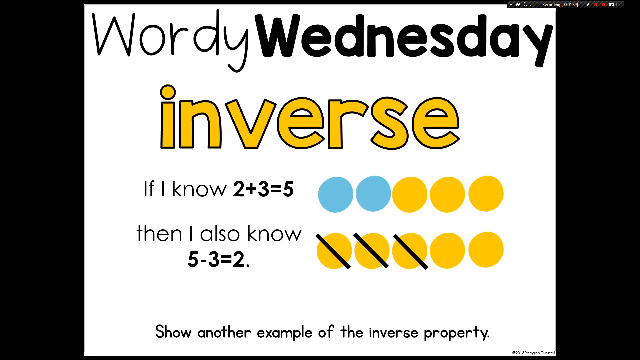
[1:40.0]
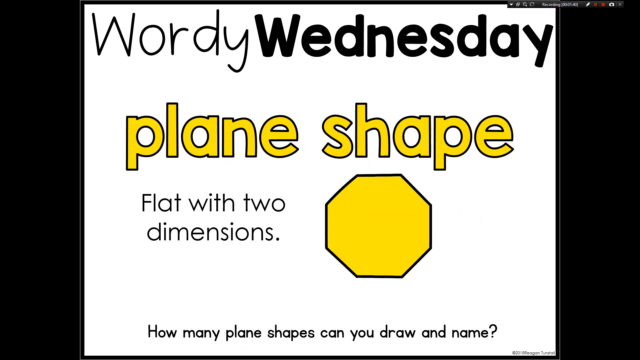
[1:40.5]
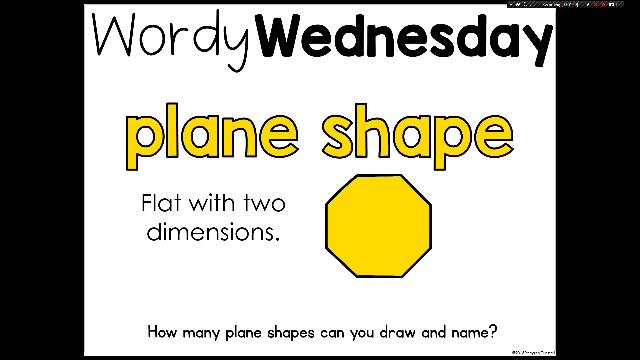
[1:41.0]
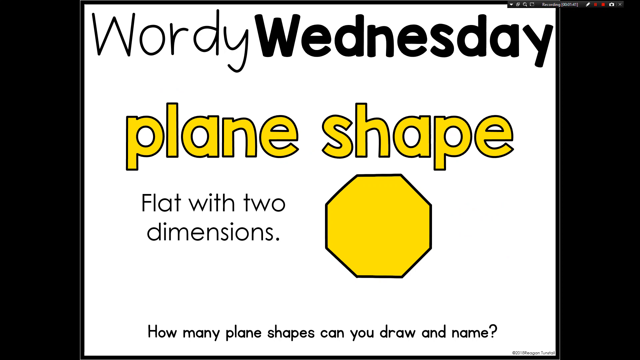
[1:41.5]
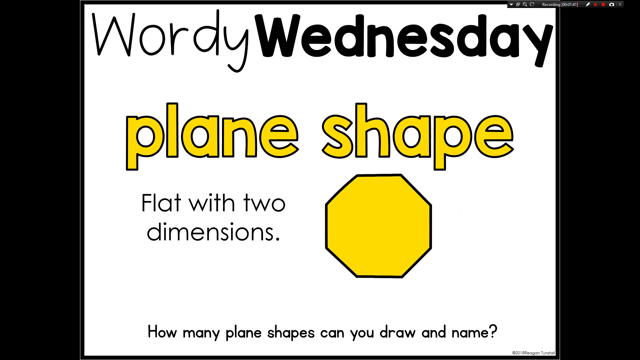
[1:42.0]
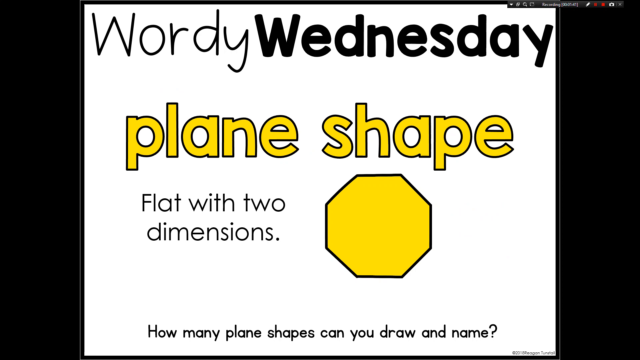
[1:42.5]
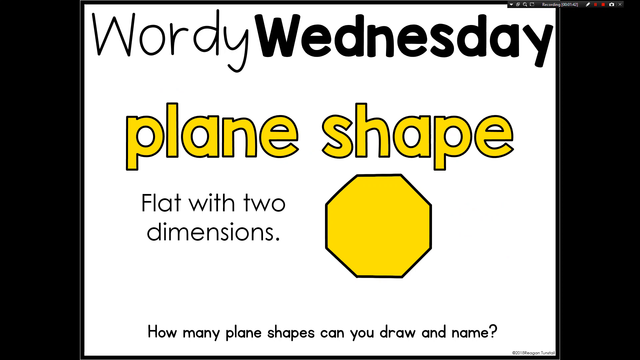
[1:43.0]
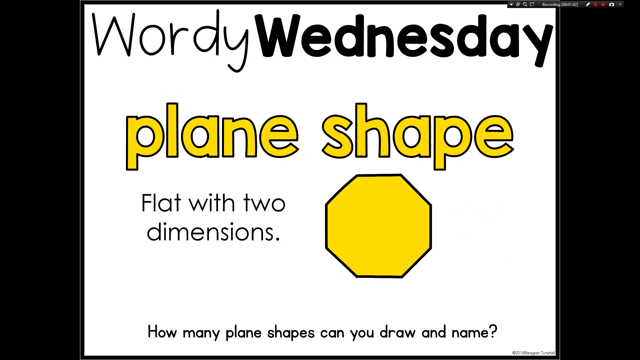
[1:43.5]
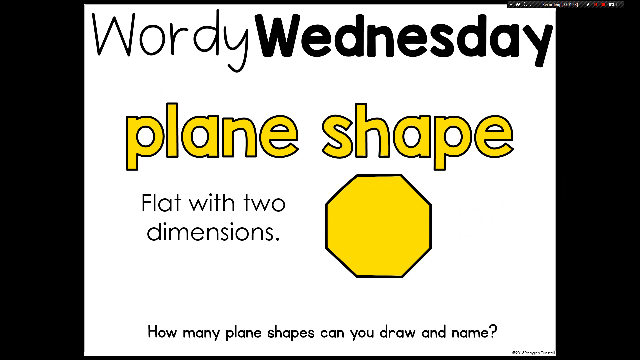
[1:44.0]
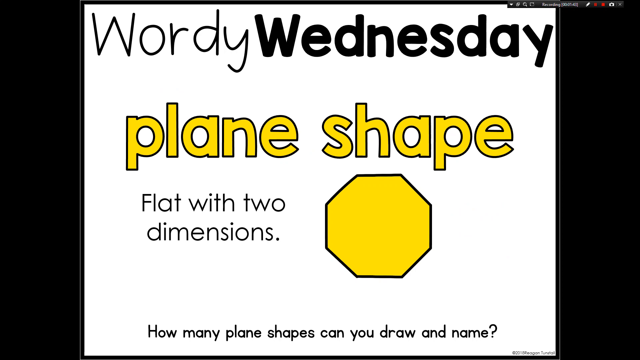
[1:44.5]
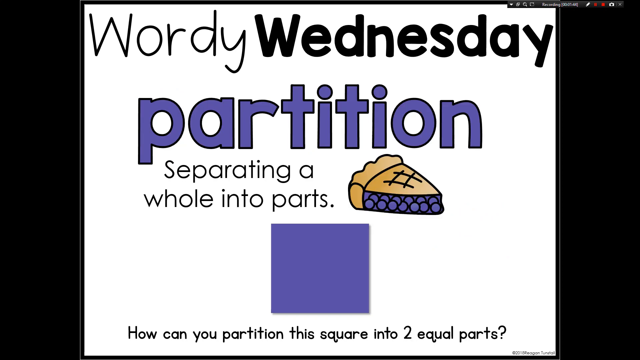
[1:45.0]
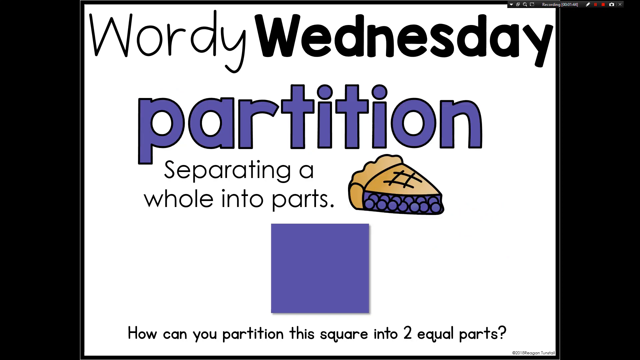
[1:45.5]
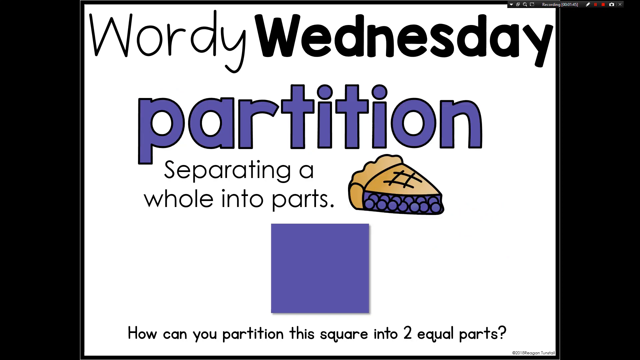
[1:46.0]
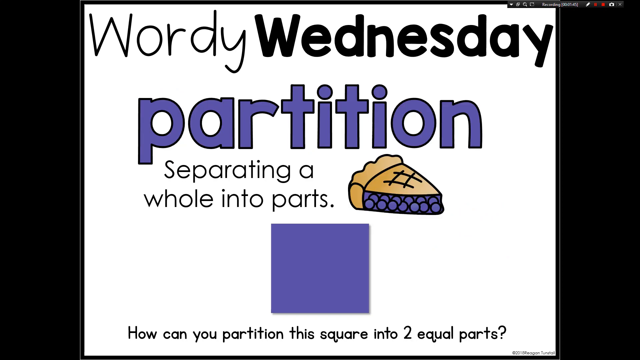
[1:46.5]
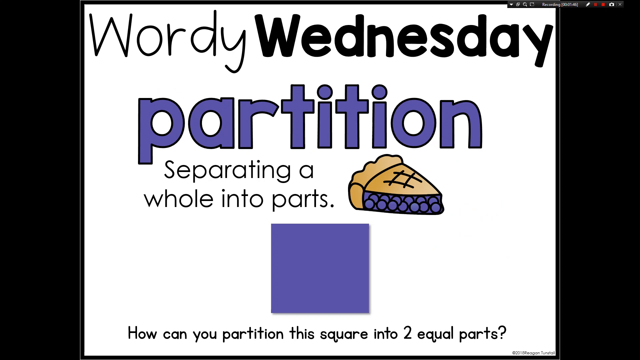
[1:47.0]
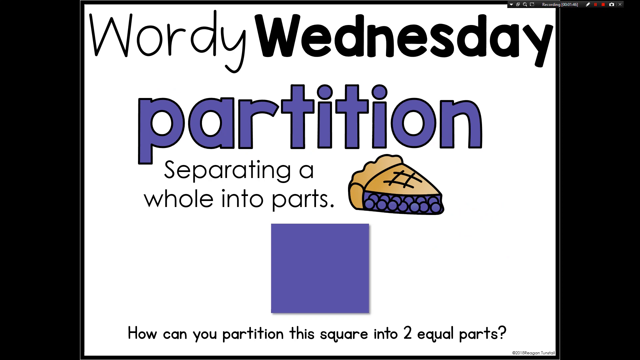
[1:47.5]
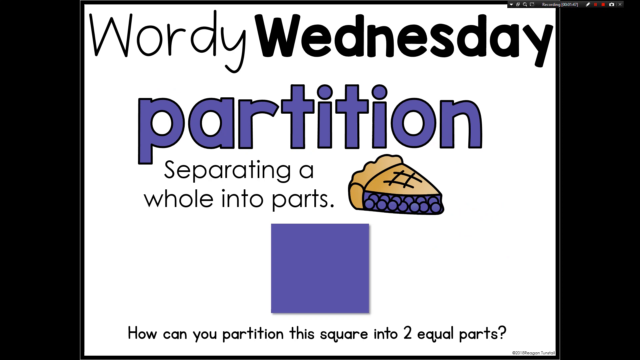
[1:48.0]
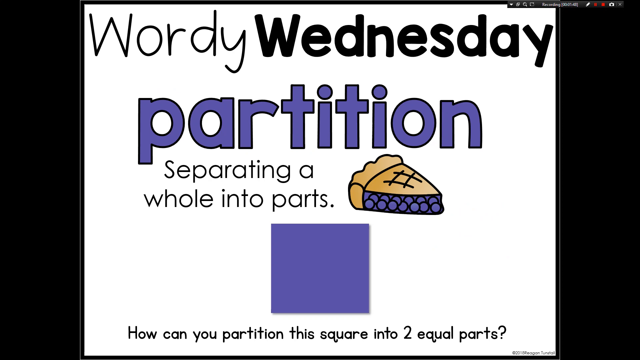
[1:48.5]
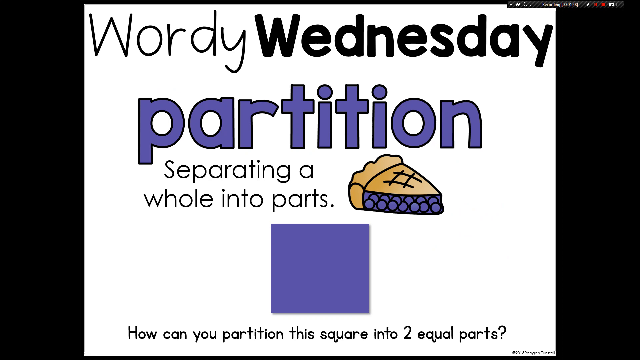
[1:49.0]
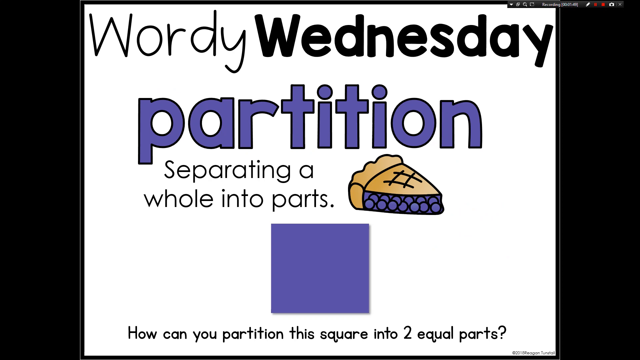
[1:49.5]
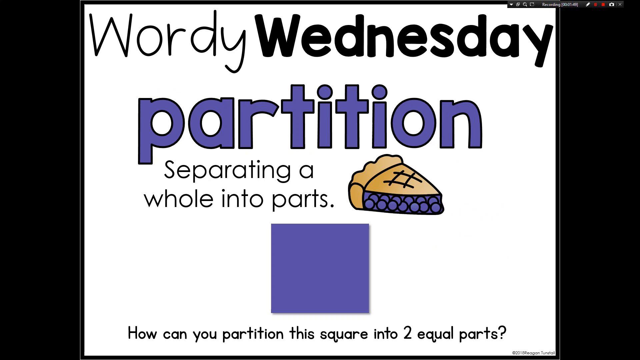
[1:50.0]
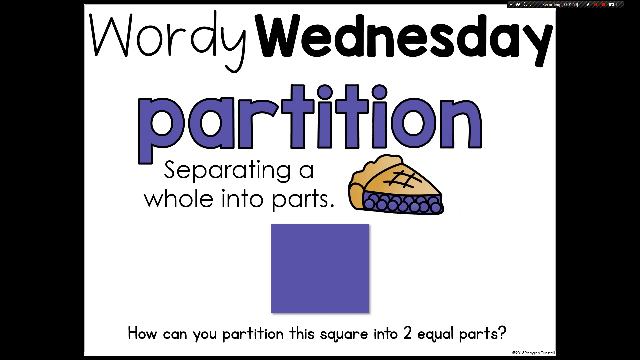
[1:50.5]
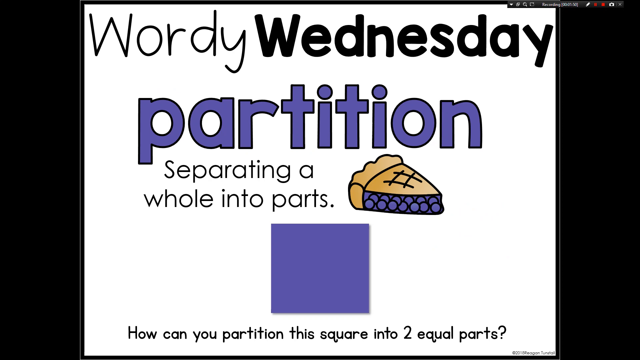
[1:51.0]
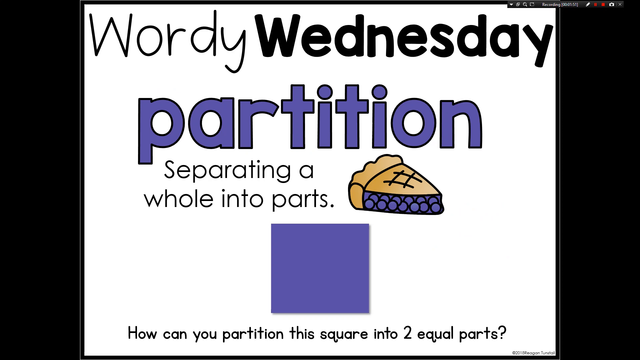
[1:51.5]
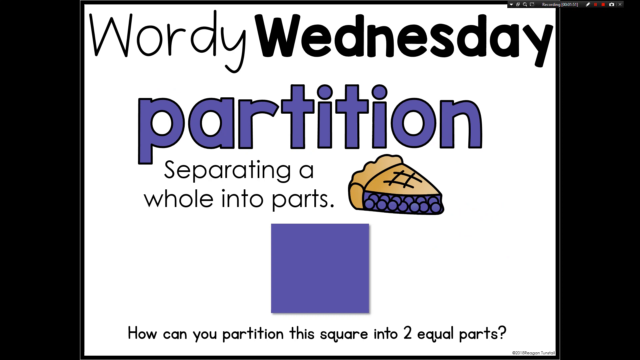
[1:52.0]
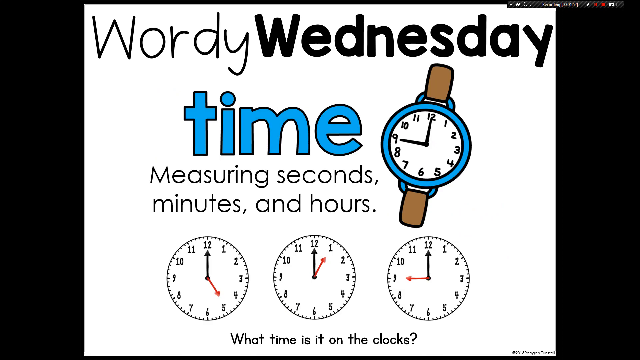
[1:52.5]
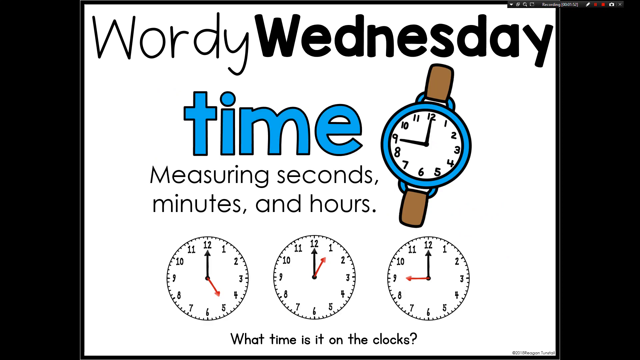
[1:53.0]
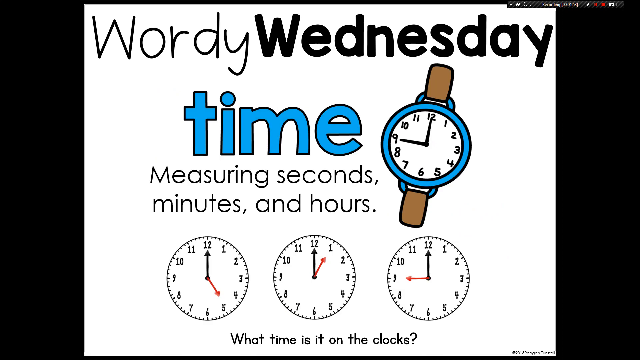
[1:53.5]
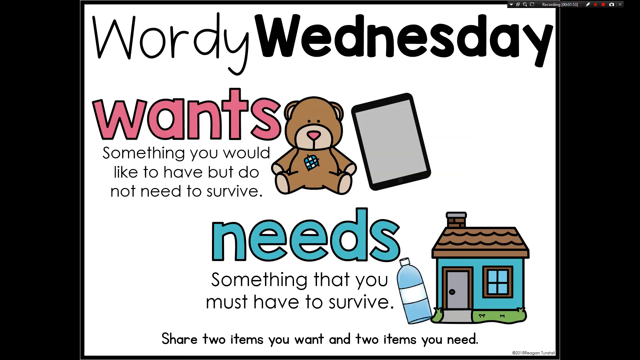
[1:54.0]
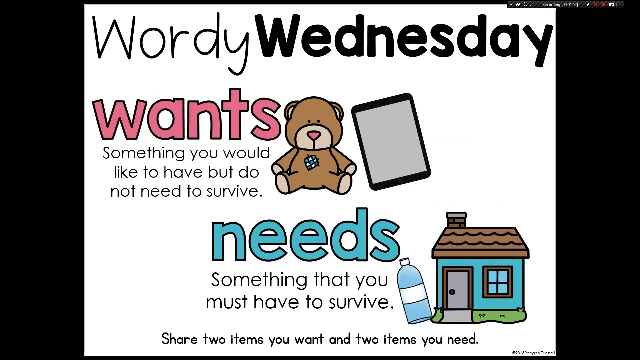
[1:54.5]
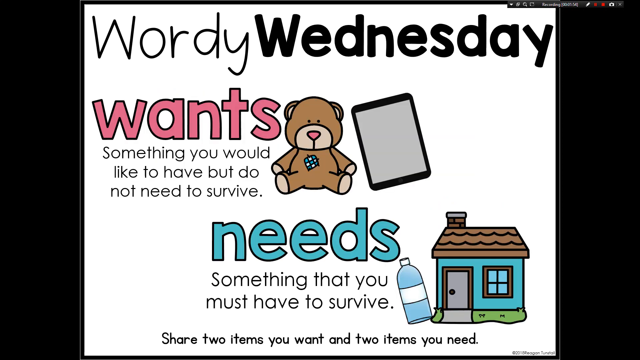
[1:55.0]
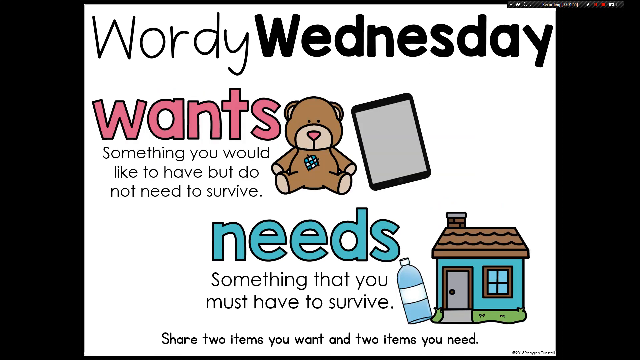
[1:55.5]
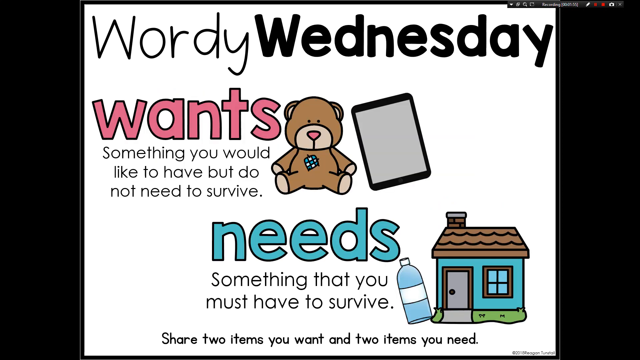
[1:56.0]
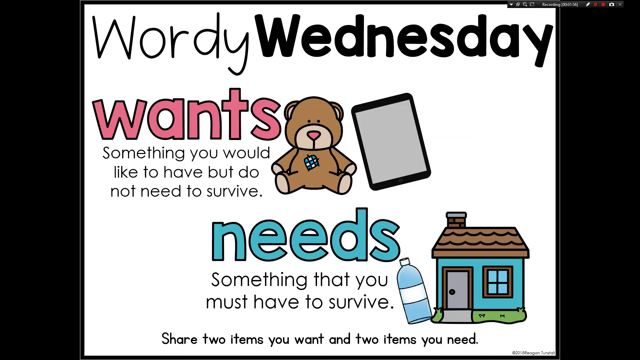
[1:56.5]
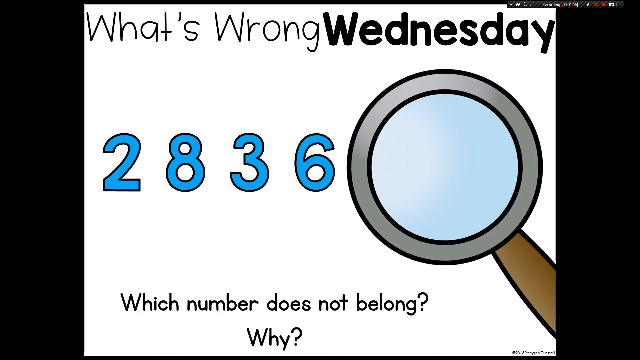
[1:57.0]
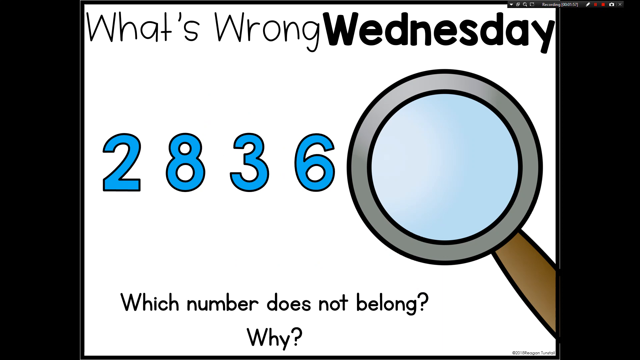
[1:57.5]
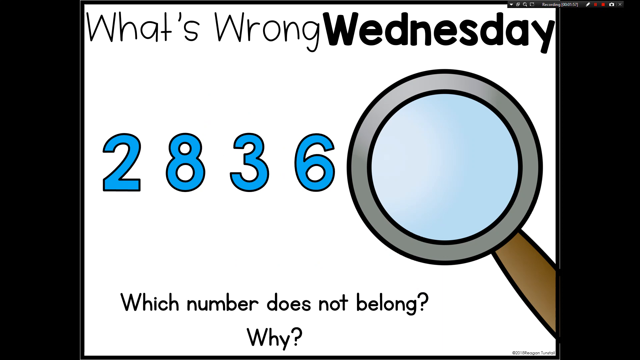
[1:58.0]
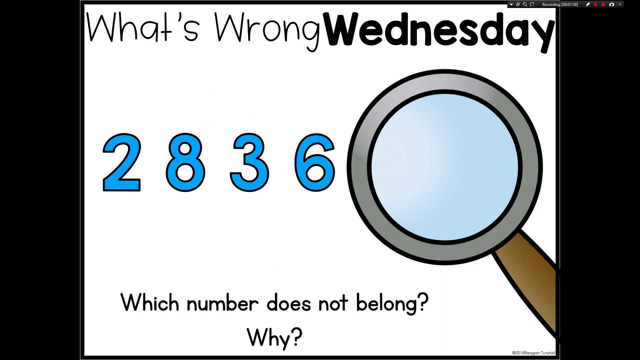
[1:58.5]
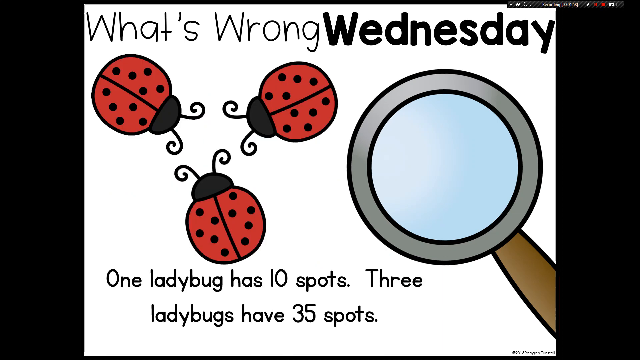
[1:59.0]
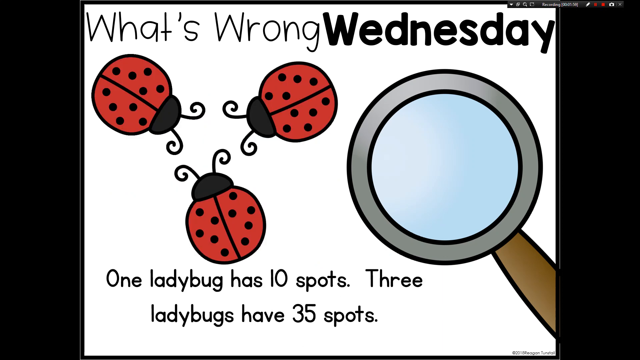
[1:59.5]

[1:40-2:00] "Wordy Wednesday" vocabulary cards appear: "inverse: If I know 2 plus 3 equals 5, then I also know 5 minus 3 equals 2", "plane shape: flat with two dimensions", "partition: separating the whole into parts", "time: measuring seconds, minutes and hours", and "wants: something you would like to have, but you do not need to survive. Need: something that you must have to survive." Then "What's wrong Wednesday" shows numbers with "Which number does not belong? Why?", followed by a "What's wrong Wednesday" problem saying one ladybug has 10 spots and three have 35 spots.